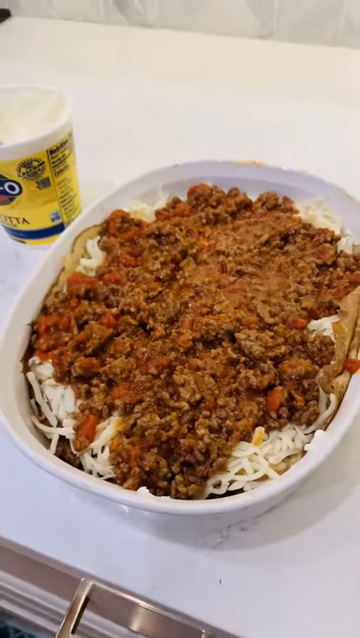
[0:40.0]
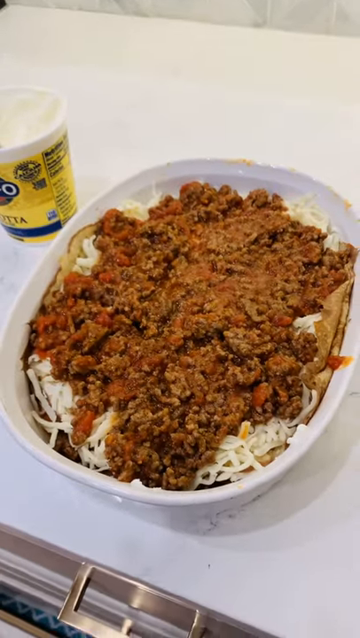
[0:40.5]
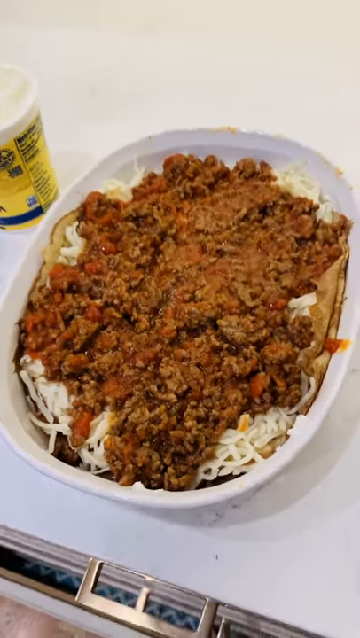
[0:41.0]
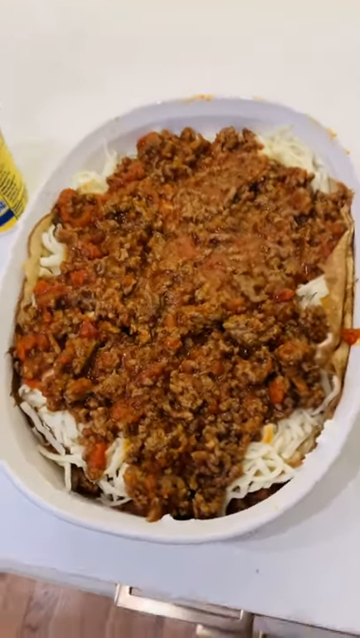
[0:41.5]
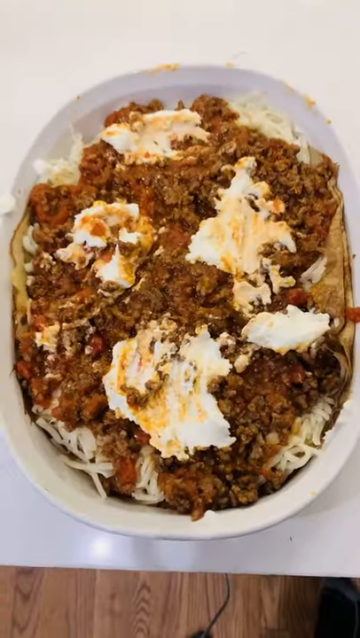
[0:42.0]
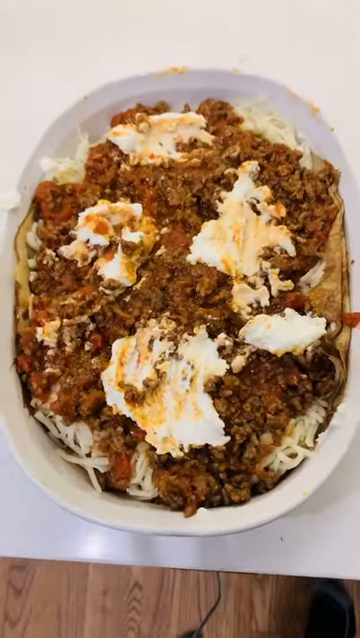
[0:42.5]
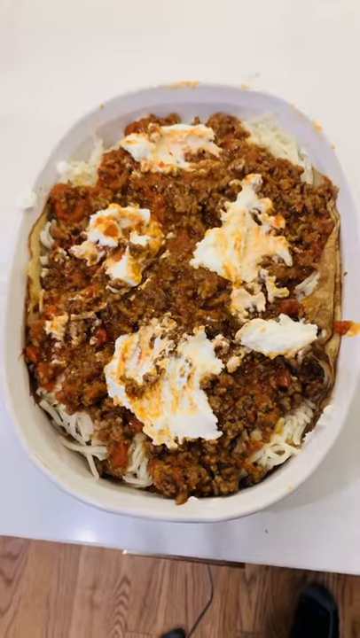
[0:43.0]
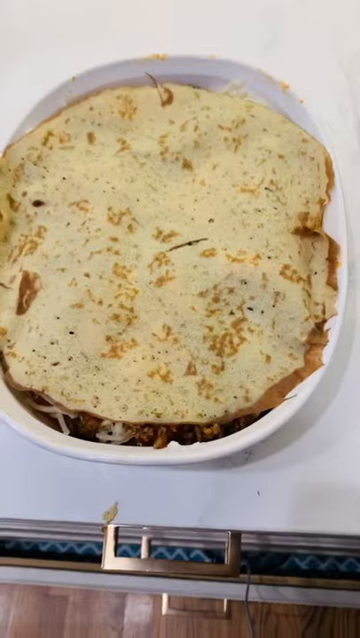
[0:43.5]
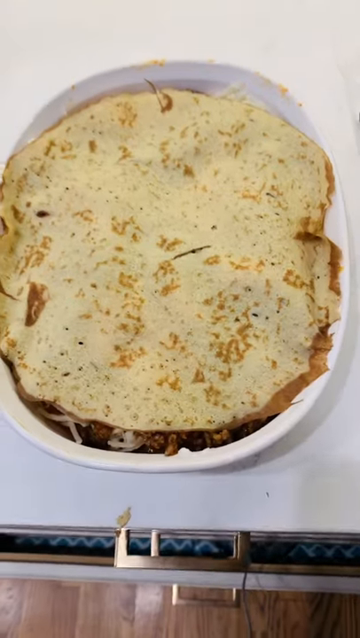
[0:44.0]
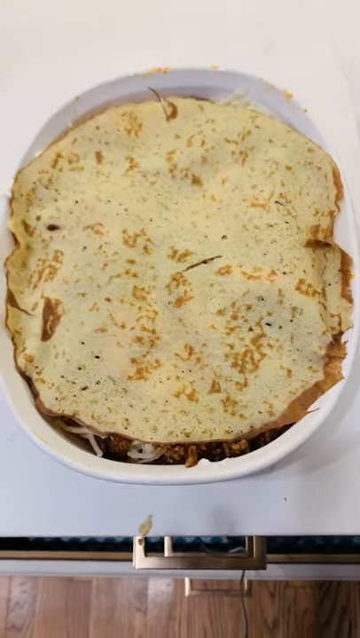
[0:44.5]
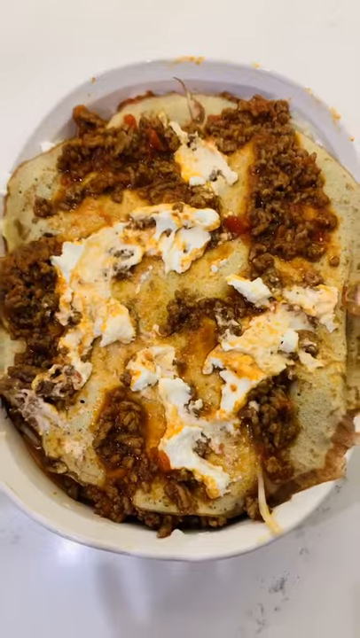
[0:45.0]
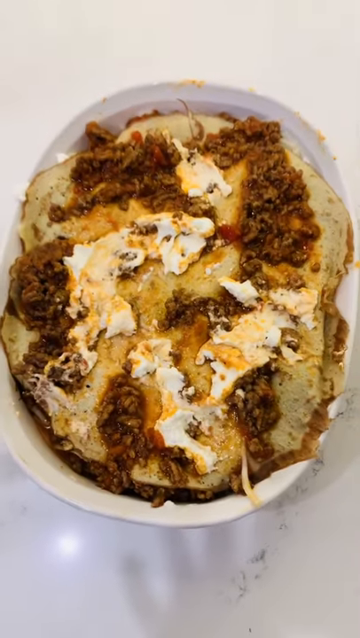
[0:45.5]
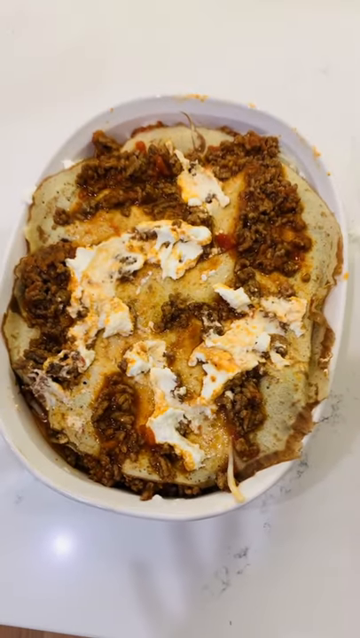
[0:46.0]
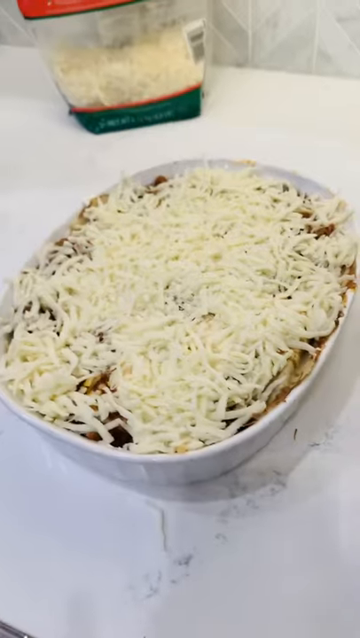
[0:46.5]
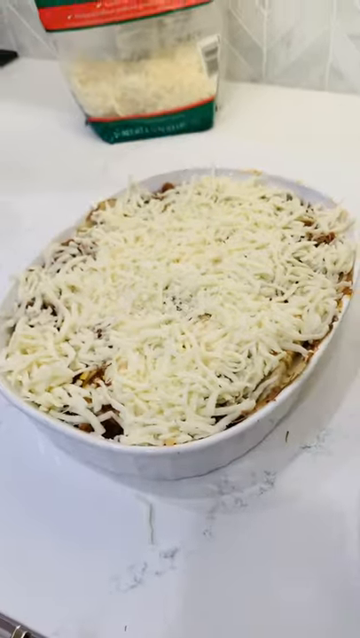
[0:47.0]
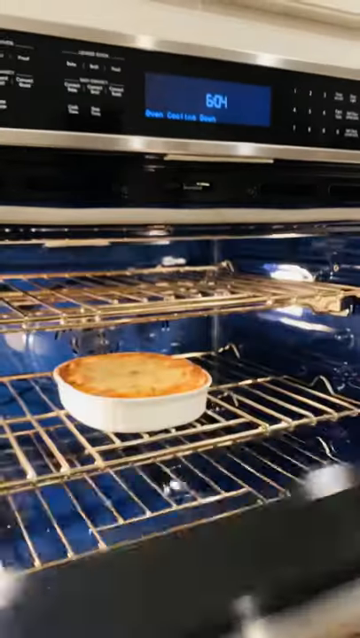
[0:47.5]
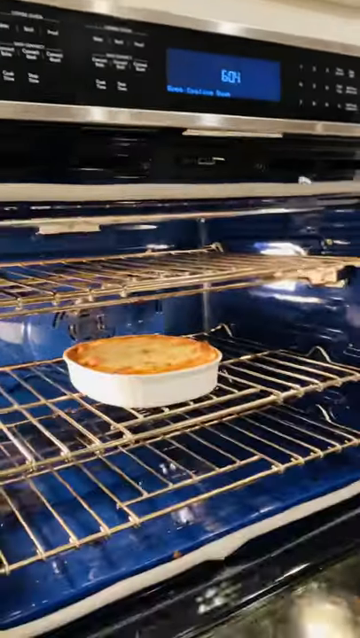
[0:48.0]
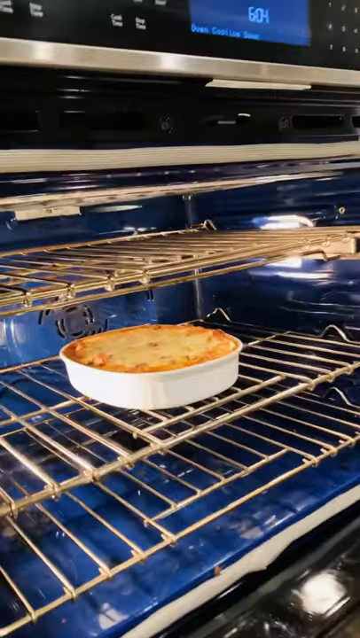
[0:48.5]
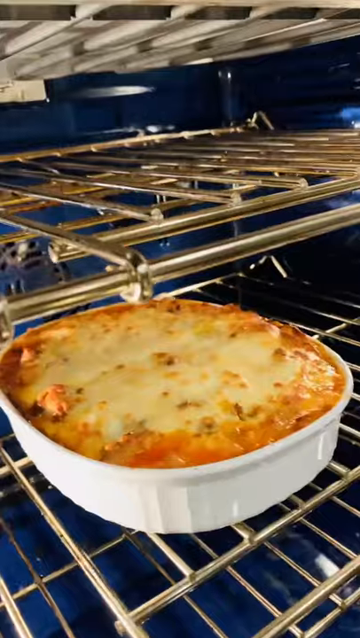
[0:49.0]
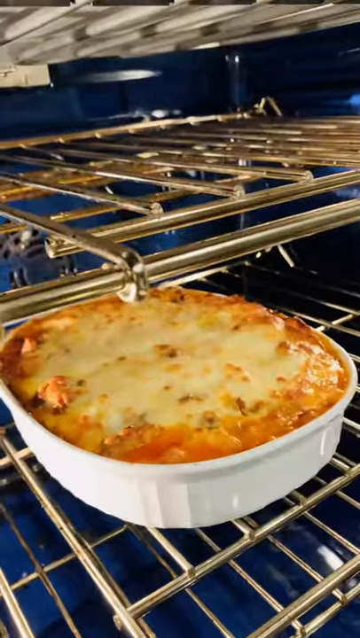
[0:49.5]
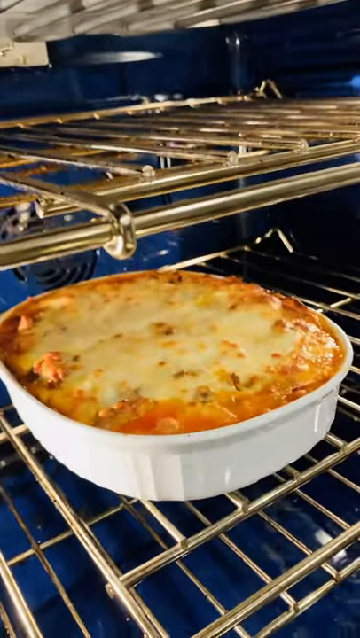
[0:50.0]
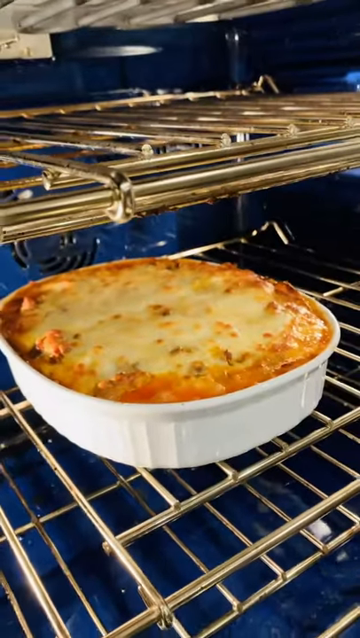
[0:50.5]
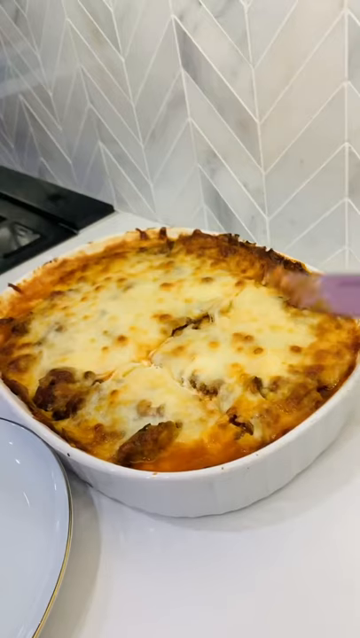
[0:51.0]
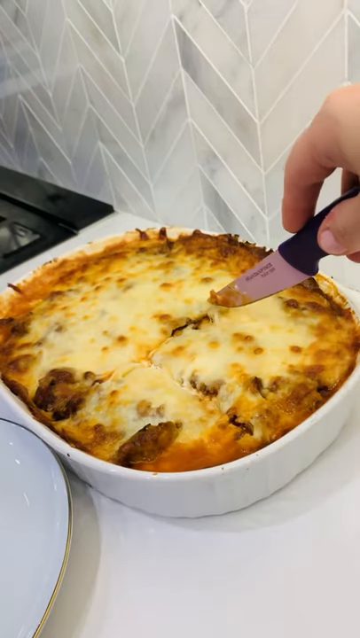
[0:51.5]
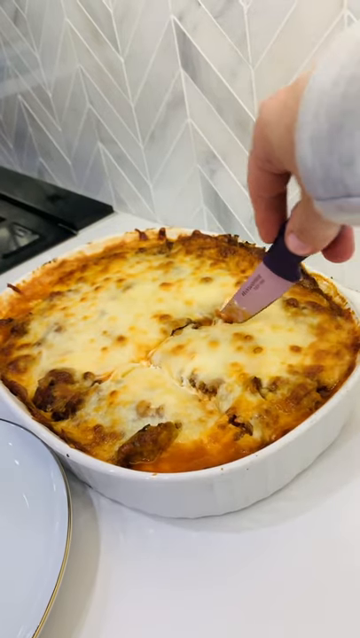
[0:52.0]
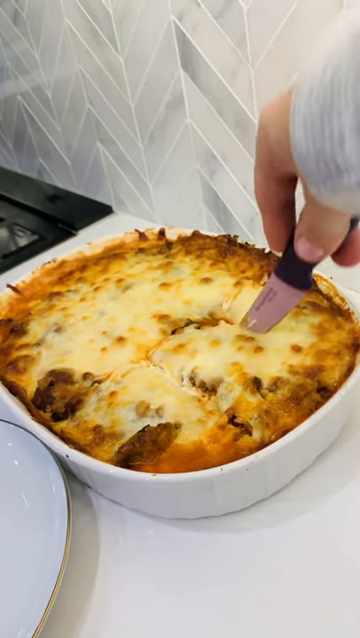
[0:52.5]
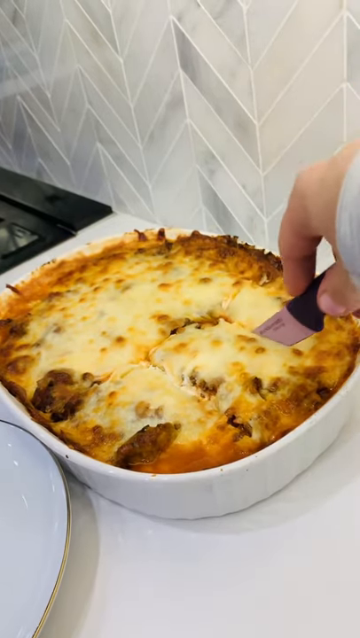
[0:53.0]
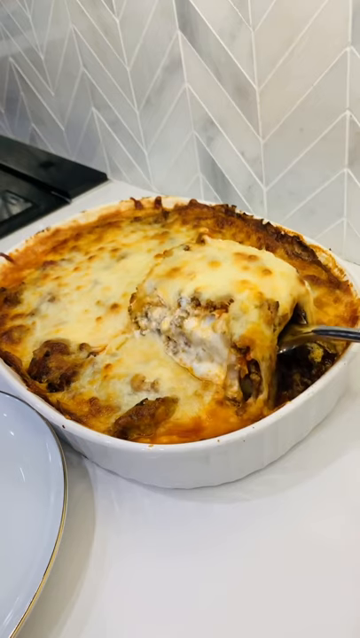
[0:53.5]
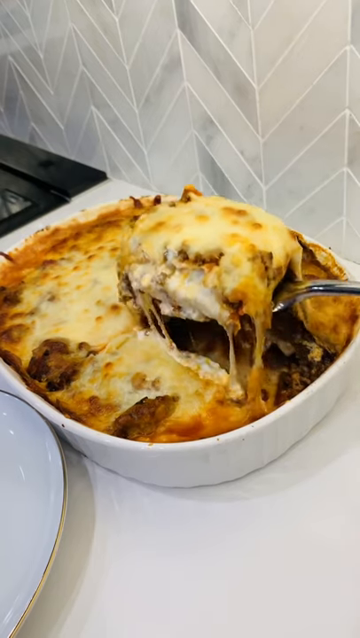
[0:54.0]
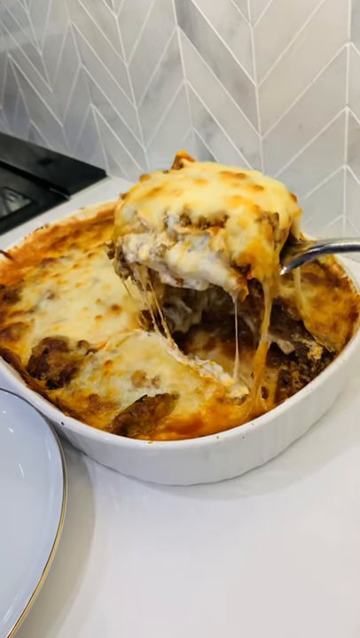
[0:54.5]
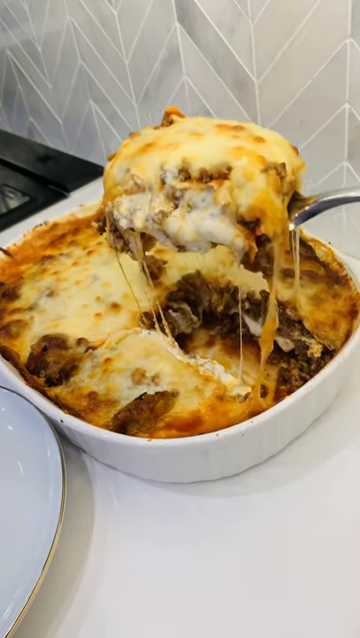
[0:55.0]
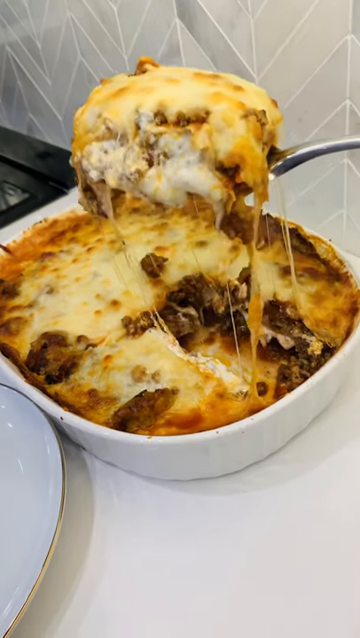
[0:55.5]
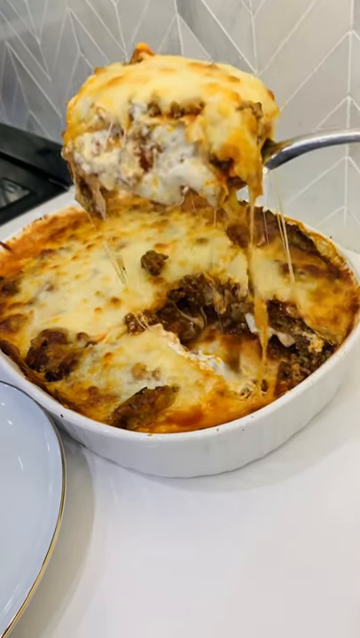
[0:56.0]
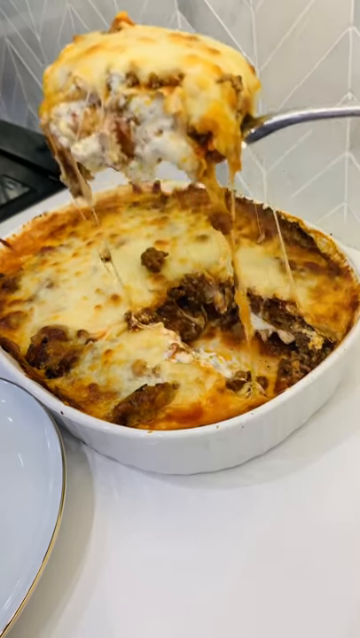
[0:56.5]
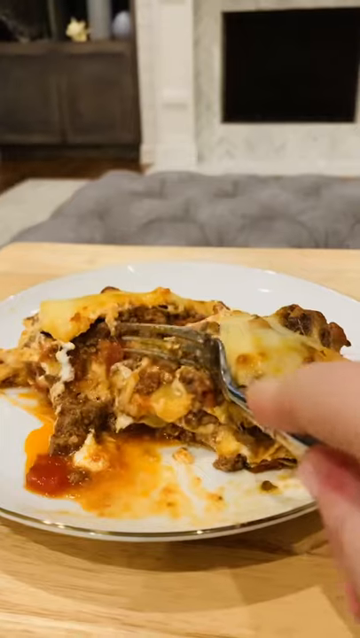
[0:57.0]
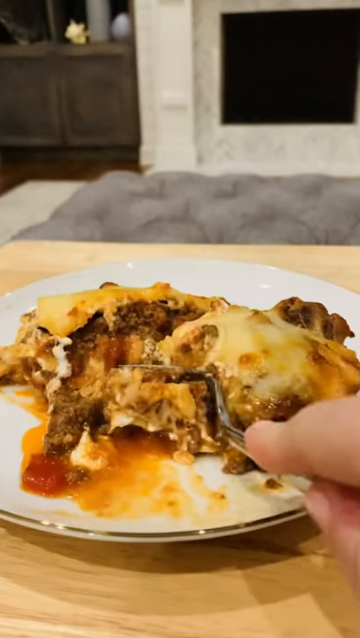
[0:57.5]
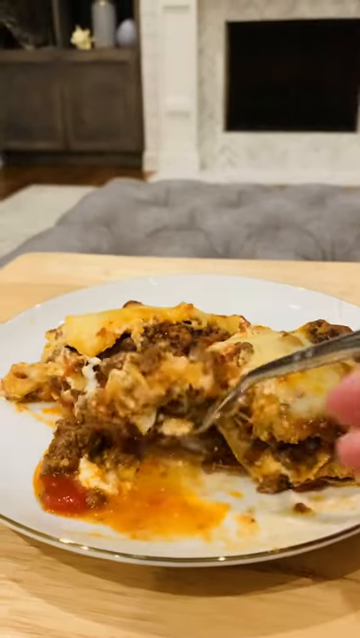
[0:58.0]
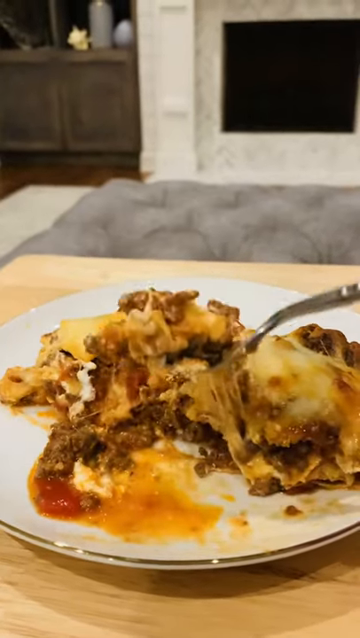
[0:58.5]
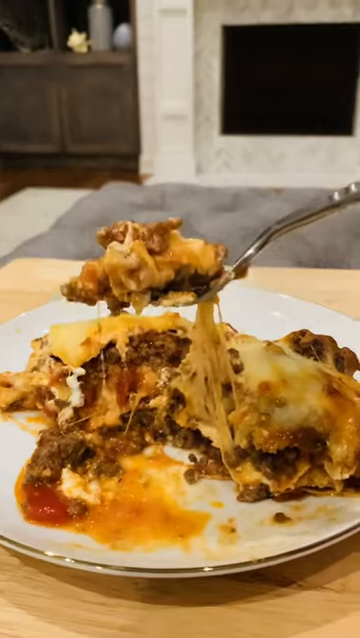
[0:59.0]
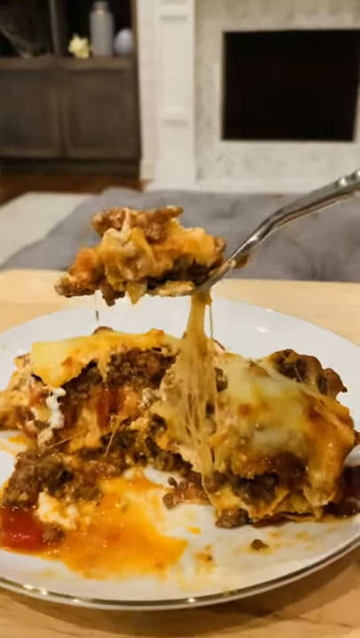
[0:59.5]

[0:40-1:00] After the ricotta cheese is spread over the top layer of egg white, more meat sauce goes on top of the ricotta and egg white. All of this is placed into a cooking dish, which apparently is then put in the oven to bake, seemingly at a temperature of 425 degrees. Once the dish is complete, it is shown again: someone cuts into the baking dish to get one small serving and plates it on a small saucer-sized plate. The lasagna is very gooey and cheesy. A fork is used to cut the lasagna into smaller bite-sized pieces, which are eaten piece by piece.